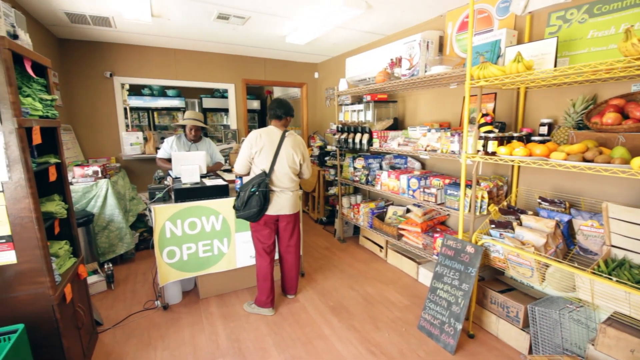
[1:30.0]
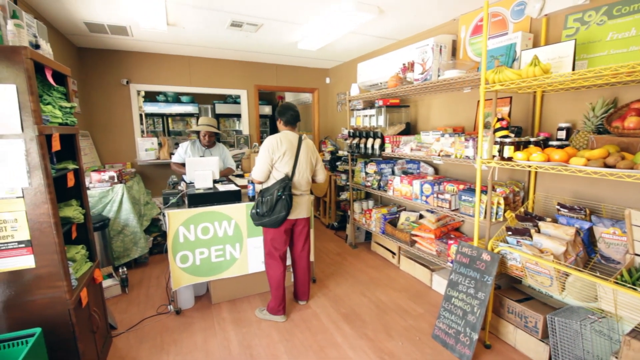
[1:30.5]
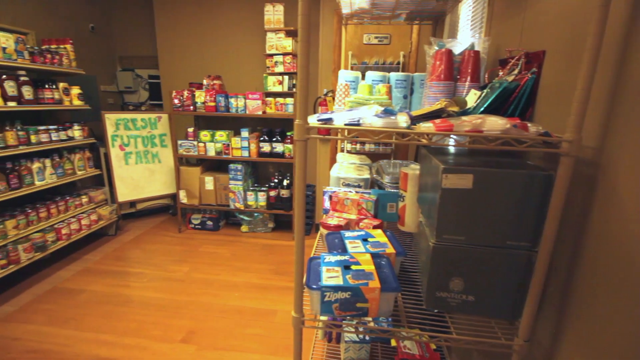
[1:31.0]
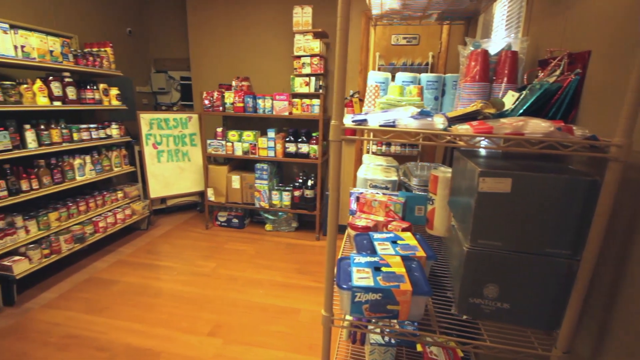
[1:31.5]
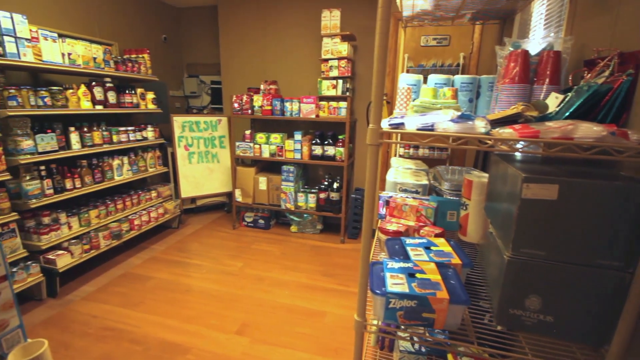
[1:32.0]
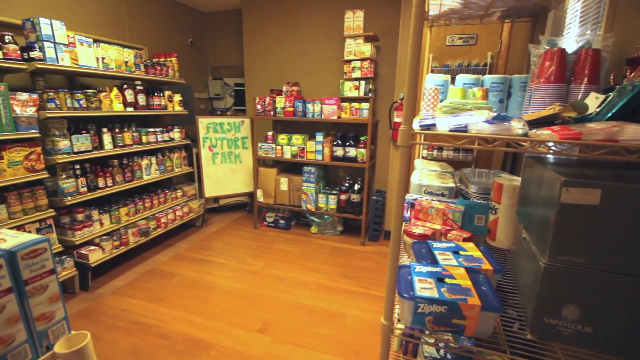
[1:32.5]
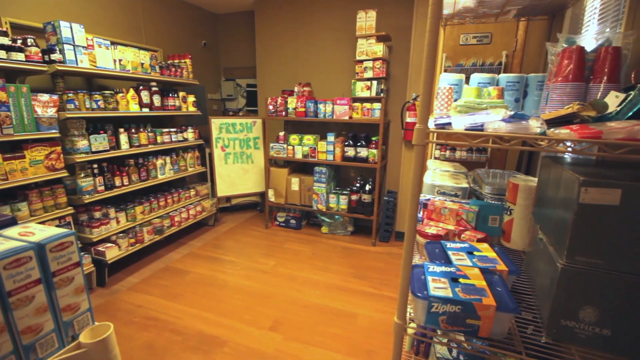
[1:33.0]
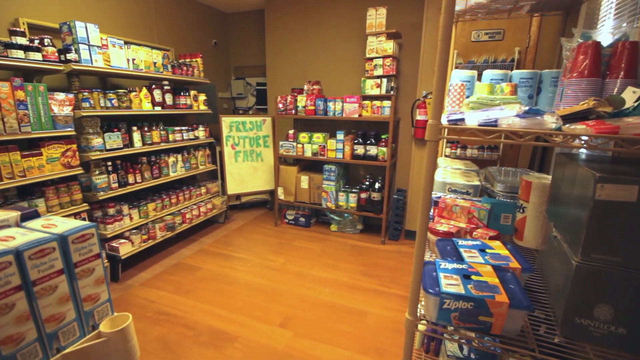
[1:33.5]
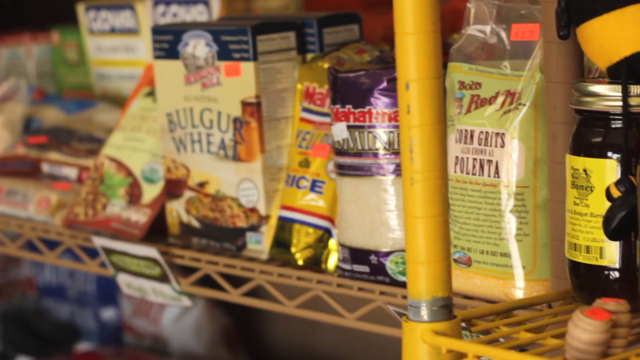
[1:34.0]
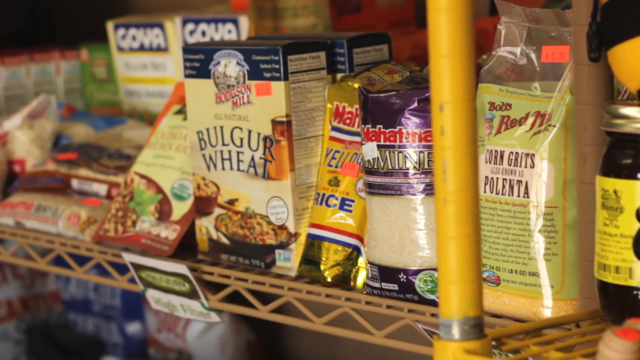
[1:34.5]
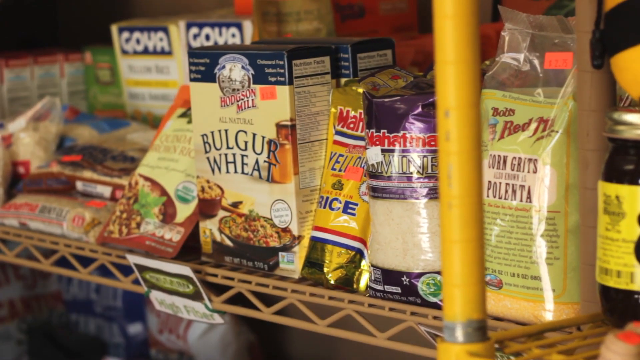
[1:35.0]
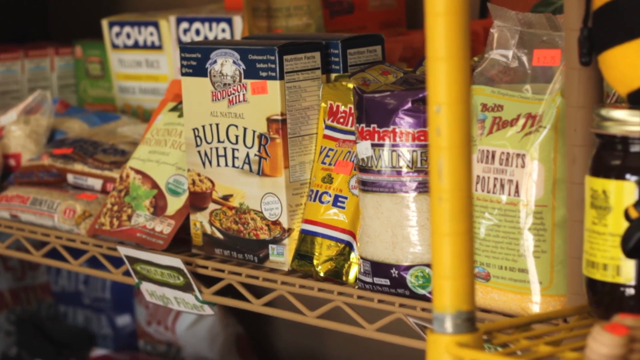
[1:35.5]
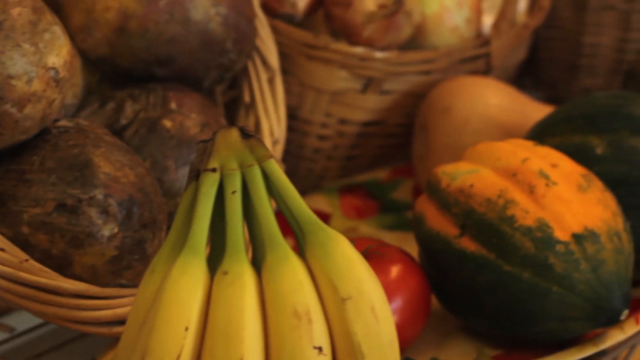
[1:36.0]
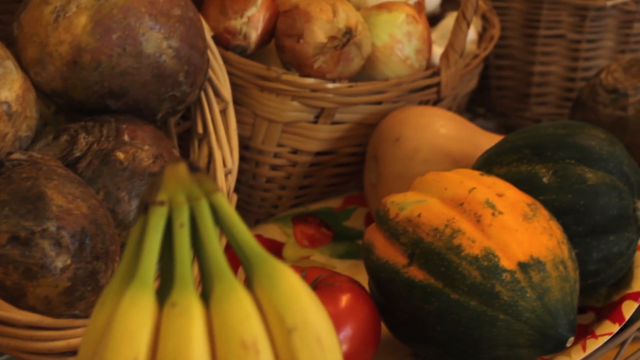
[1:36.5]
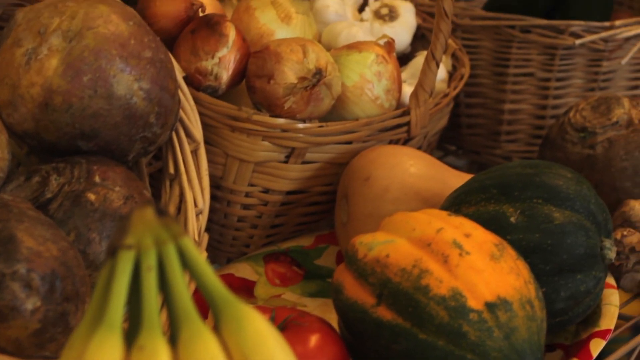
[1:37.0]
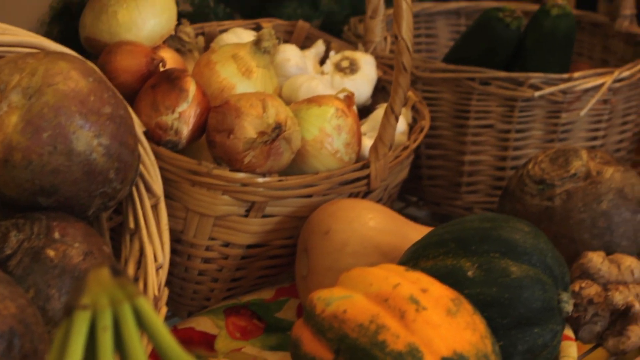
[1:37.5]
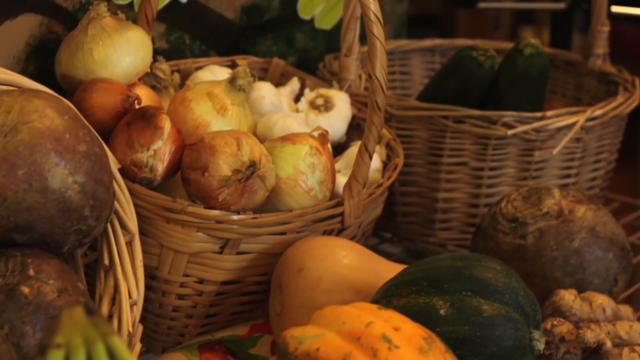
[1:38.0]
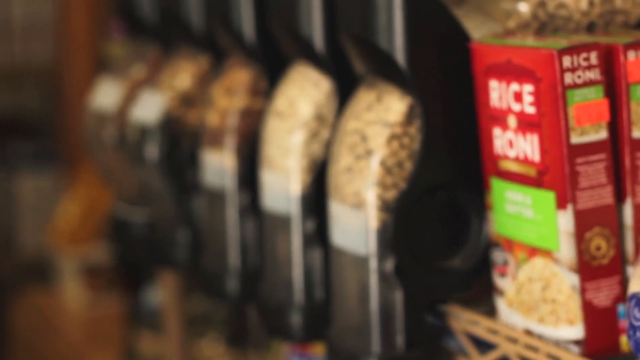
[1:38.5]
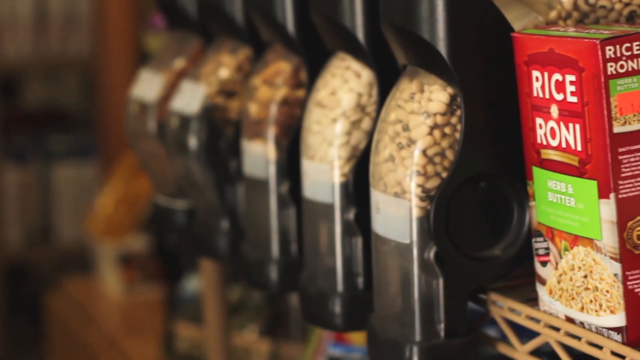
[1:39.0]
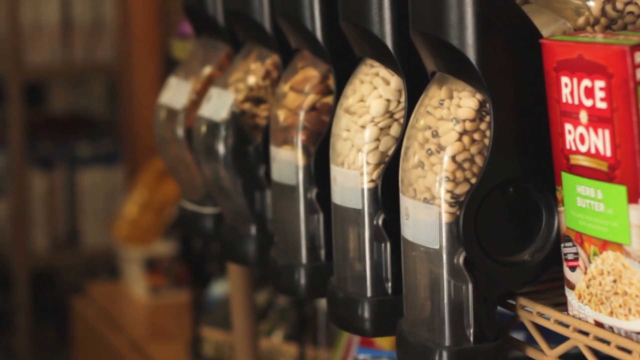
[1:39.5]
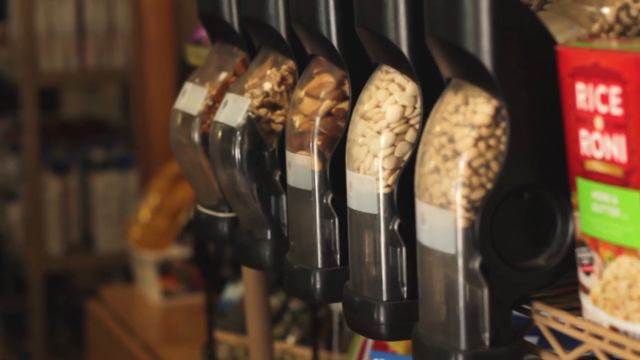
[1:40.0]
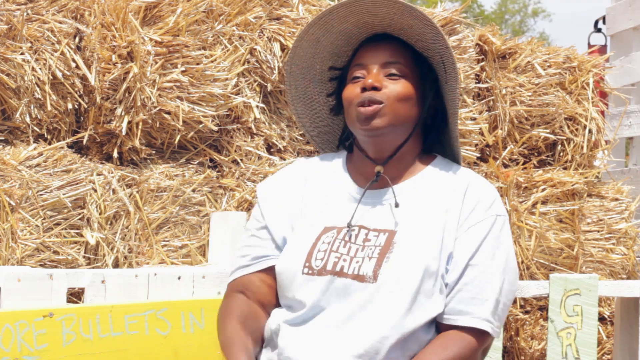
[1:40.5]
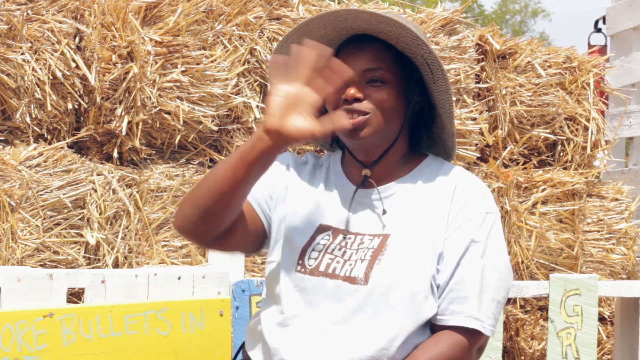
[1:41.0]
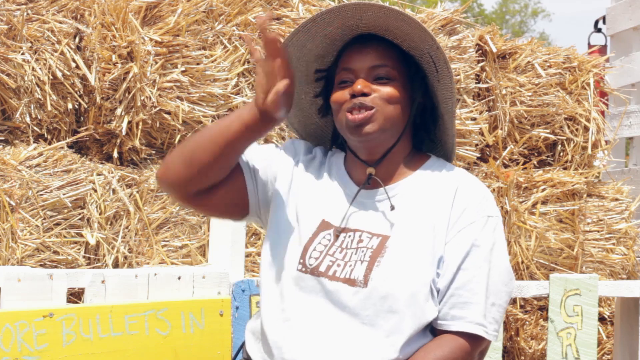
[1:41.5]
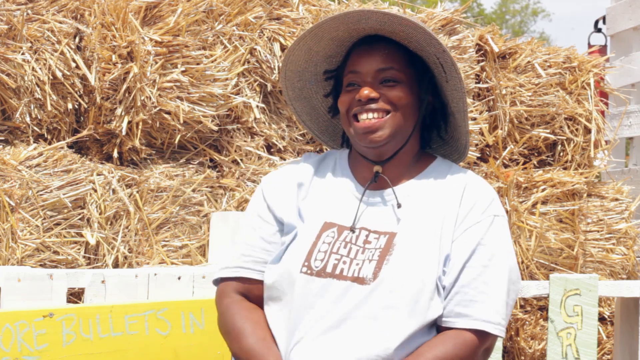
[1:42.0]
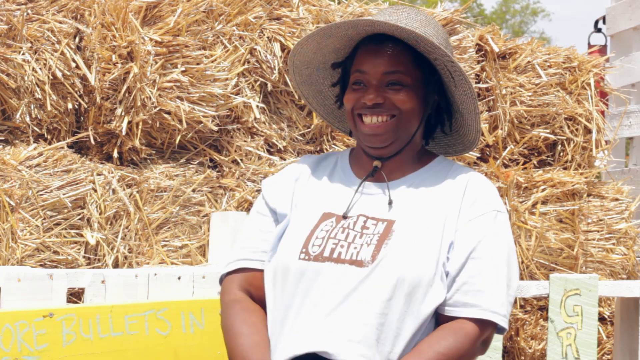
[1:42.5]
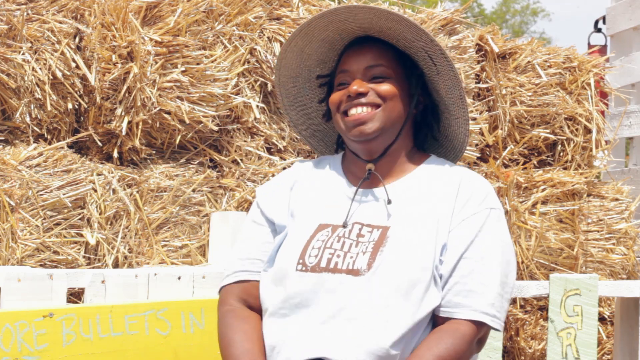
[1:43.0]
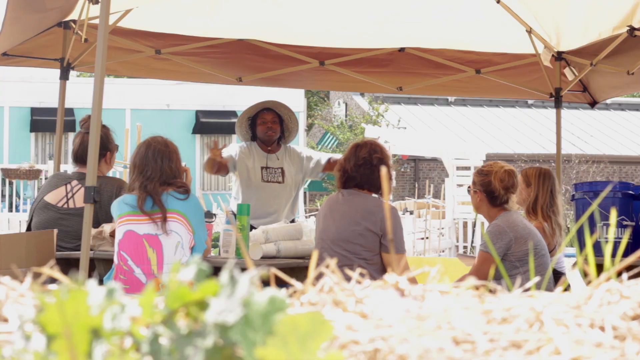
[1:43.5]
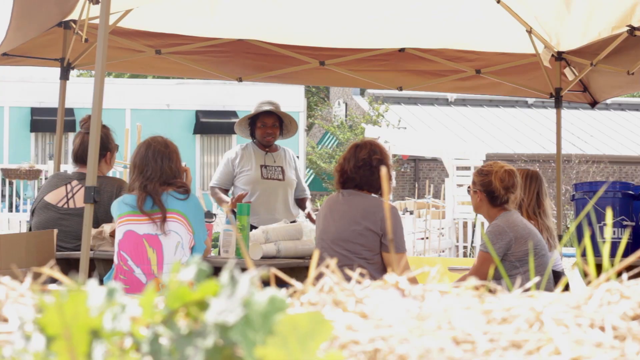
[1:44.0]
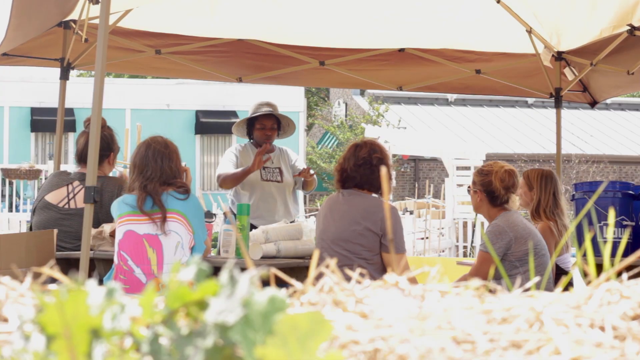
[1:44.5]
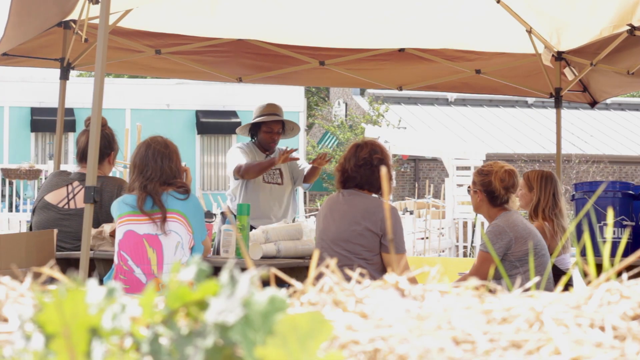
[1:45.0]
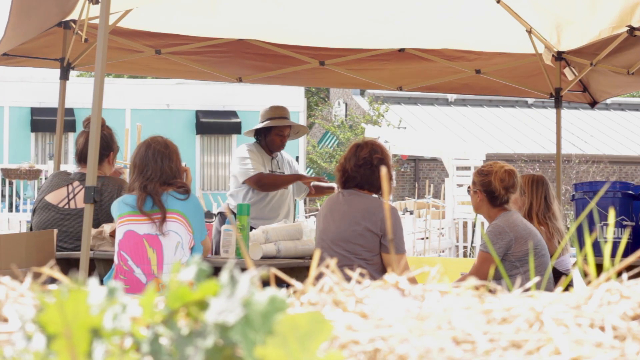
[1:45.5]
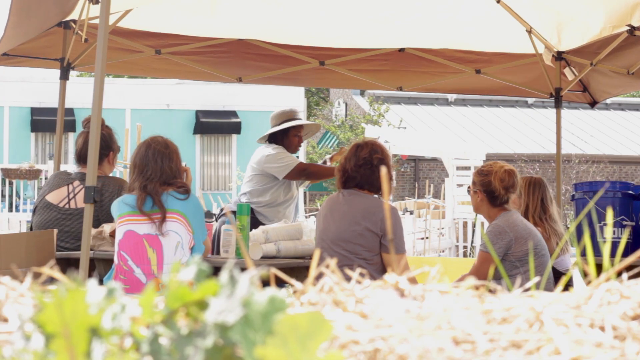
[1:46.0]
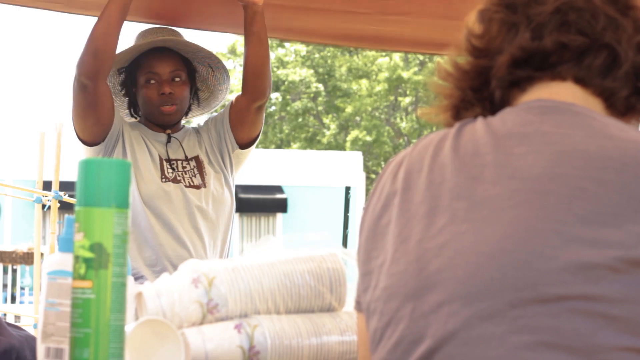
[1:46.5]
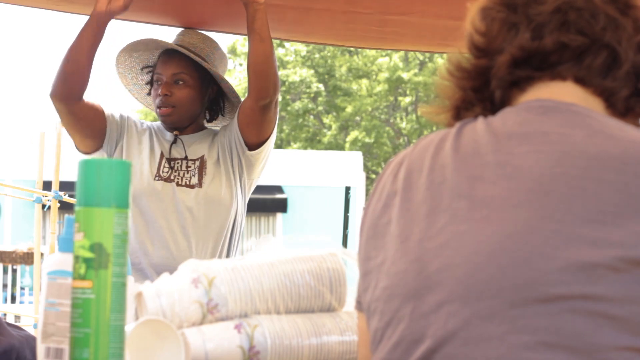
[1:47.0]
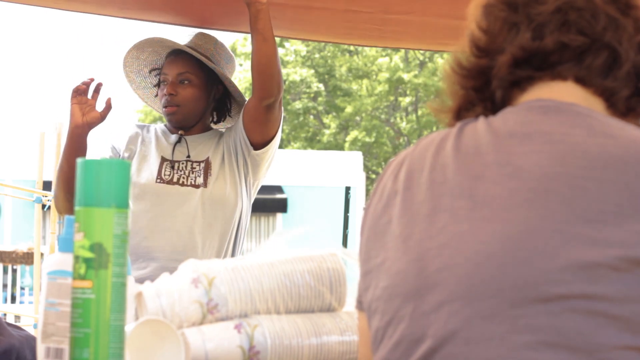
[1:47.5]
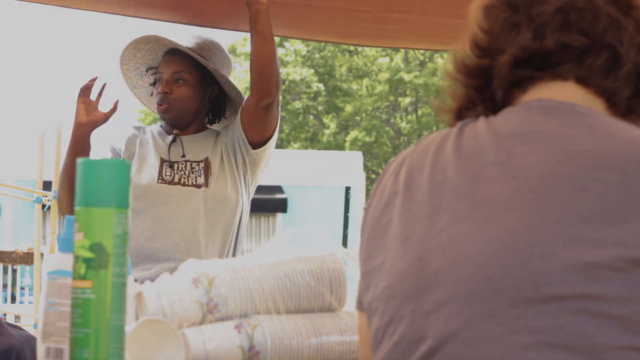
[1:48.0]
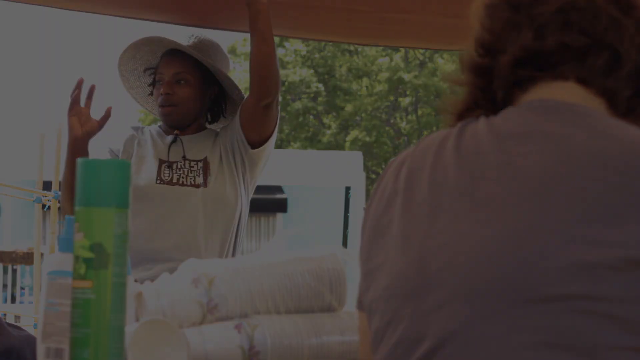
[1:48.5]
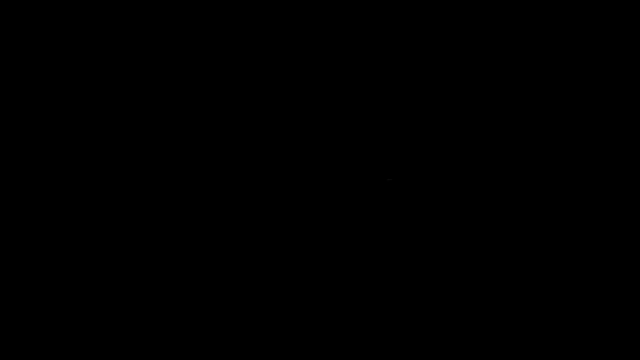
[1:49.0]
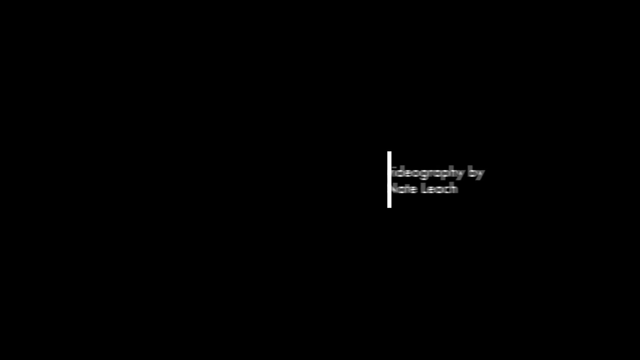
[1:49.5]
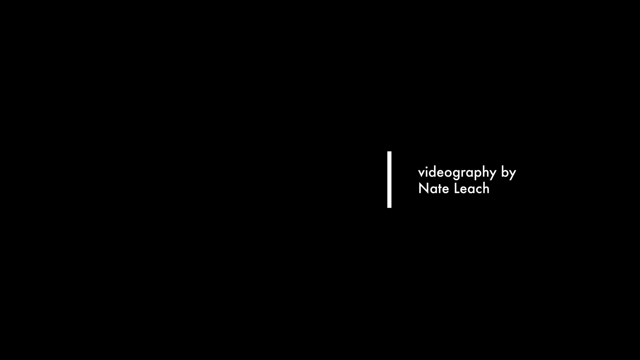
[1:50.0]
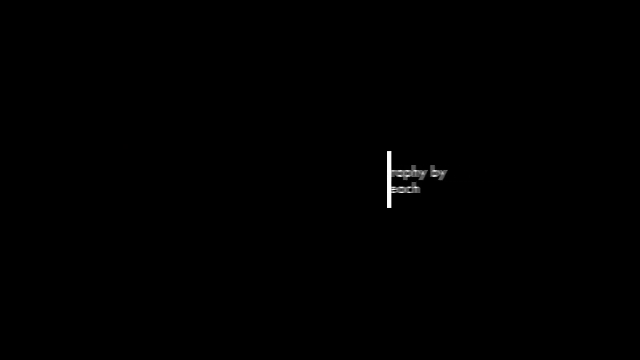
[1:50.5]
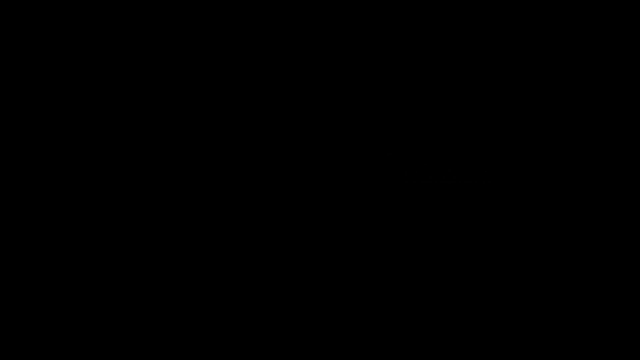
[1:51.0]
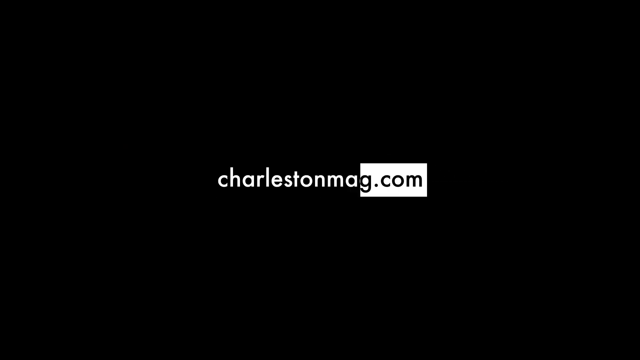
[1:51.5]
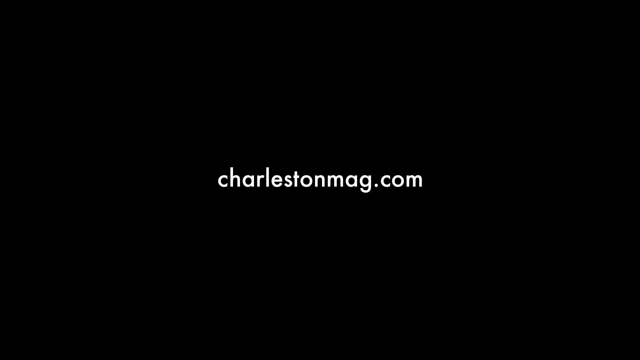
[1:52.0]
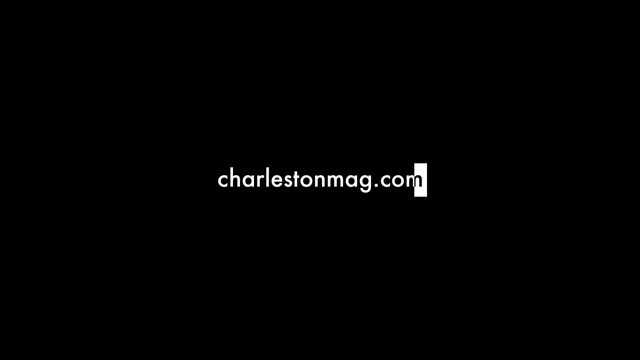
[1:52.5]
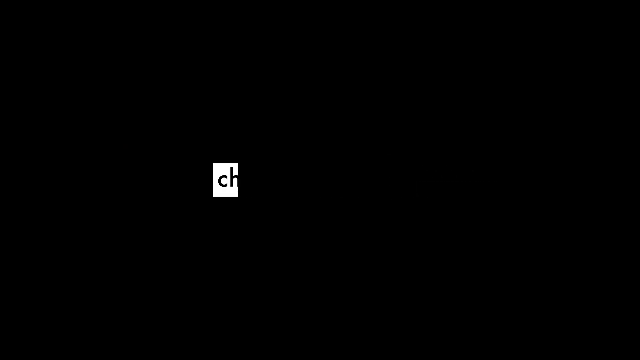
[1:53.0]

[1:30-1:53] A "now open" sign appears, followed by the front counter of the farm's produce store with fresh produce, products being stocked on the shelves, various fresh produce, and many dispensers; the store looks like a nice, cozy family storefront. The black woman is shown in a shirt and a farmer's straw hat, working at Fresh Future Farm and teaching more individuals. The video then fades to black, showing white text crediting the videography to Nate Leash, along with some other information about a website.